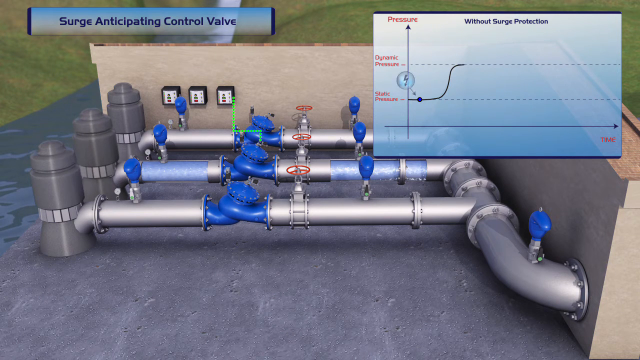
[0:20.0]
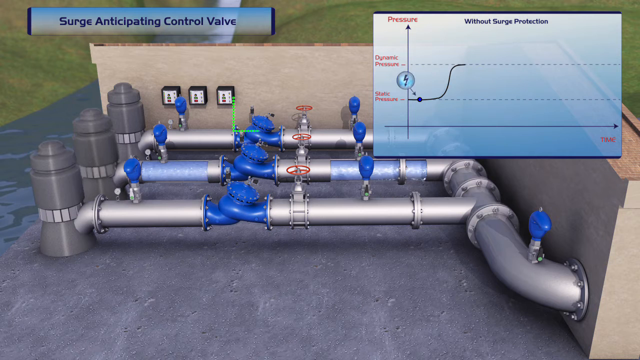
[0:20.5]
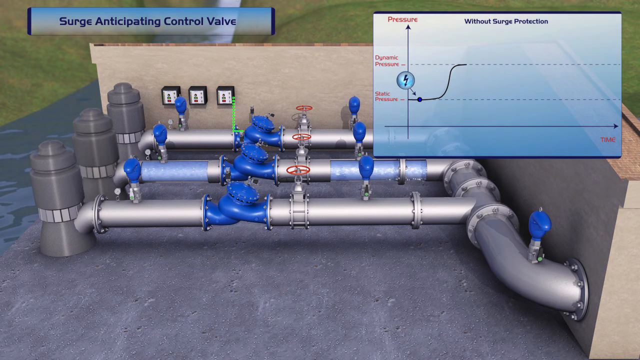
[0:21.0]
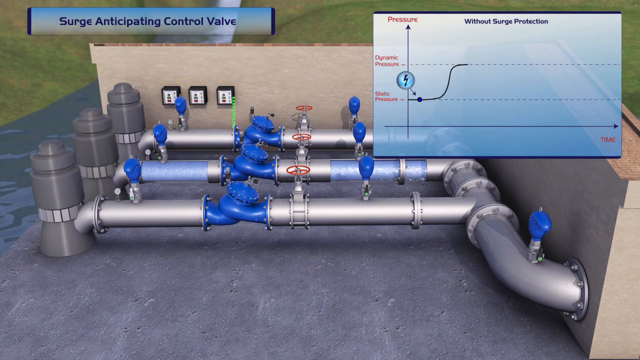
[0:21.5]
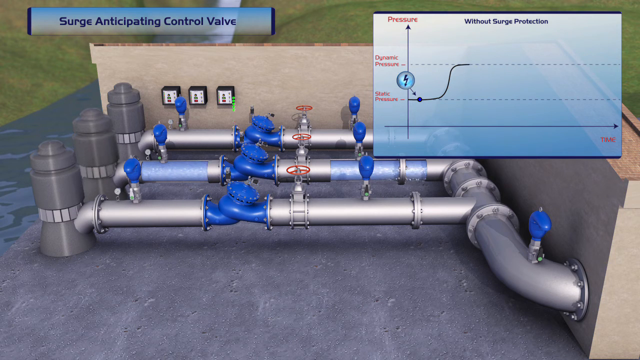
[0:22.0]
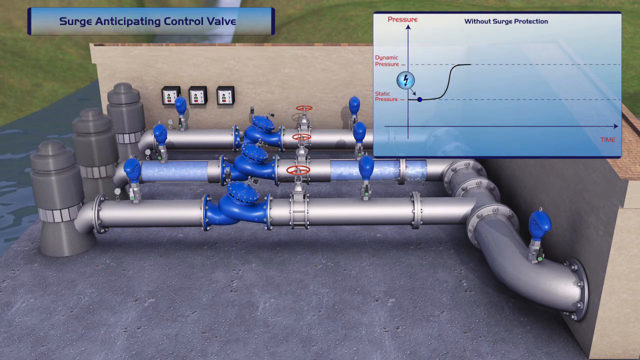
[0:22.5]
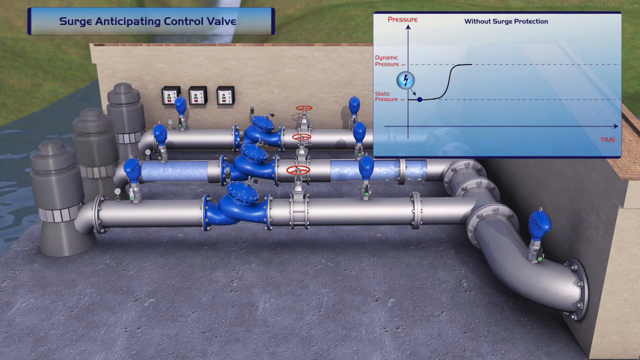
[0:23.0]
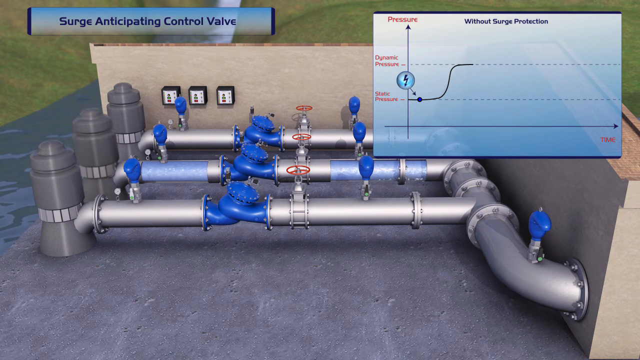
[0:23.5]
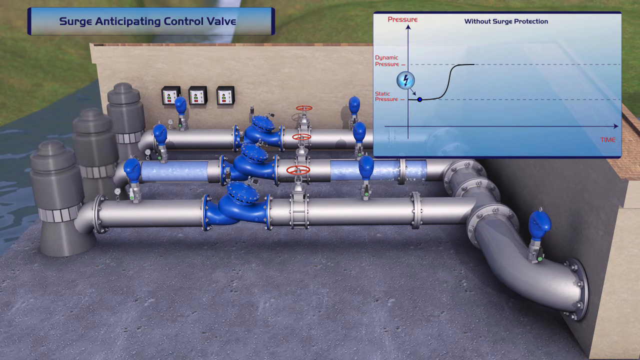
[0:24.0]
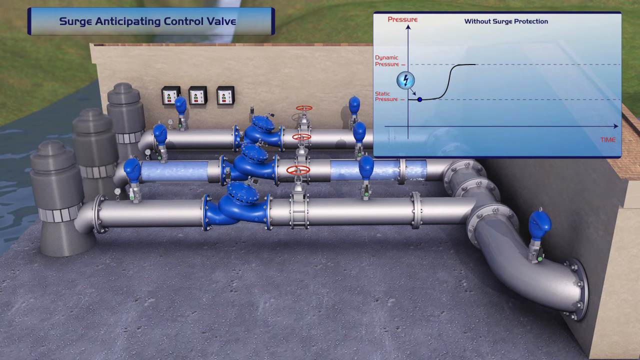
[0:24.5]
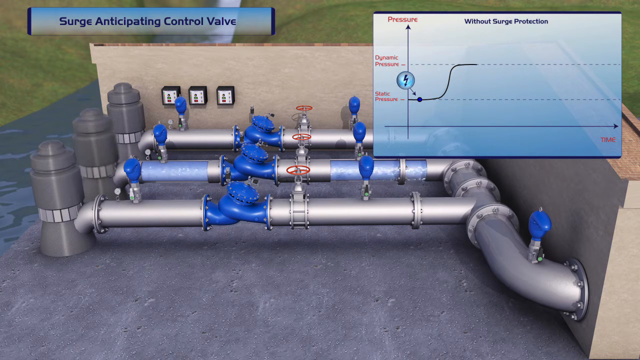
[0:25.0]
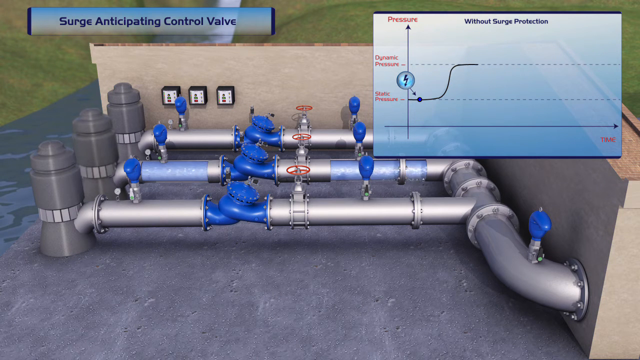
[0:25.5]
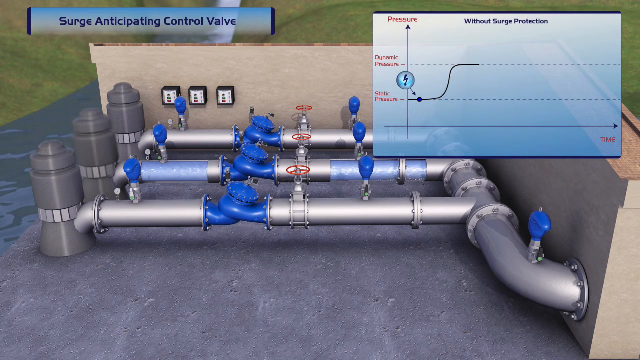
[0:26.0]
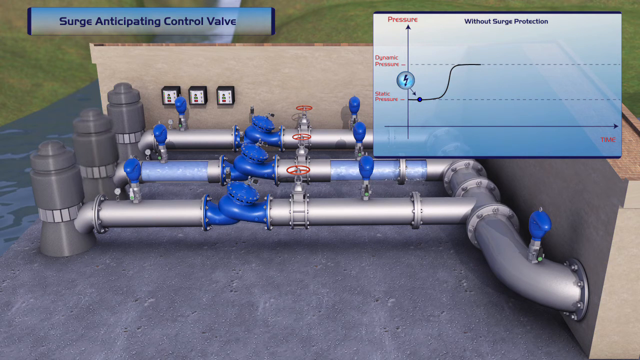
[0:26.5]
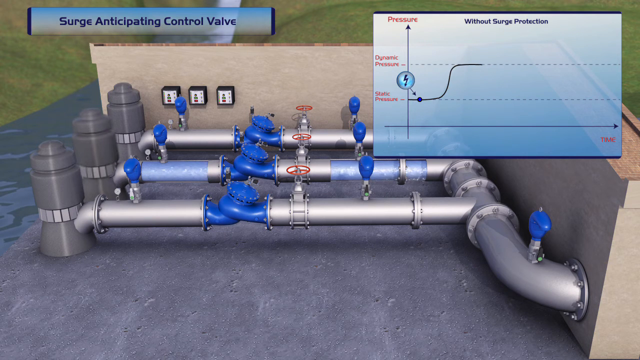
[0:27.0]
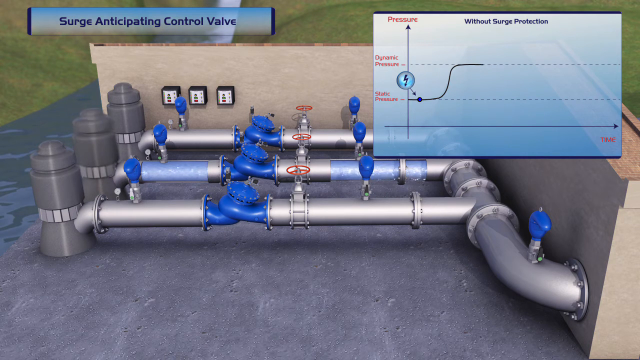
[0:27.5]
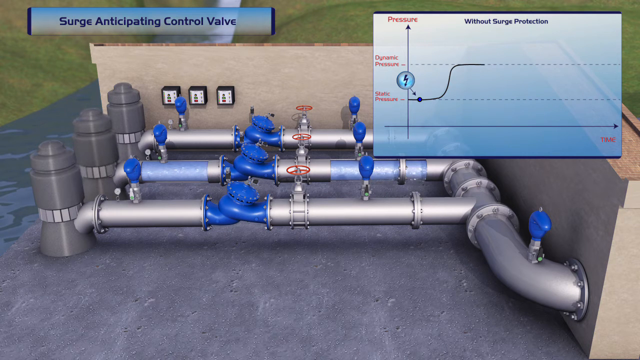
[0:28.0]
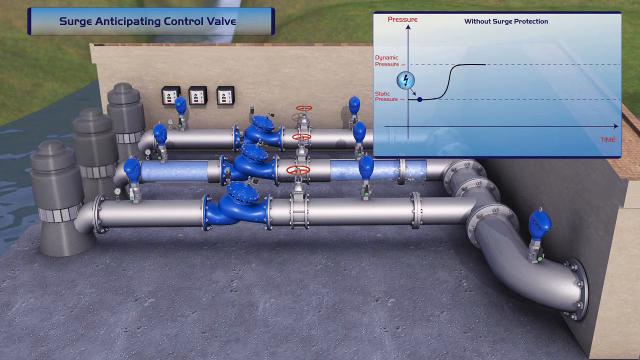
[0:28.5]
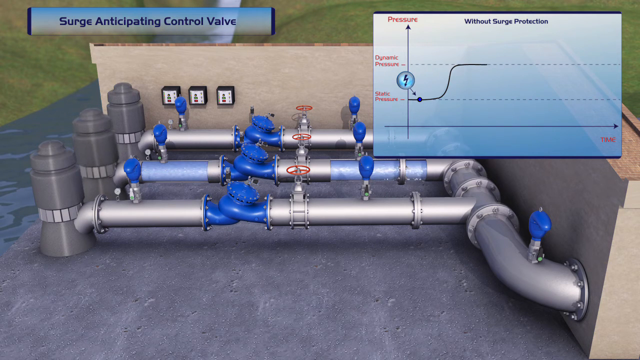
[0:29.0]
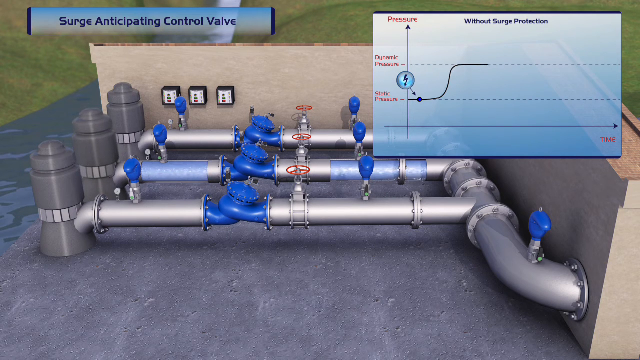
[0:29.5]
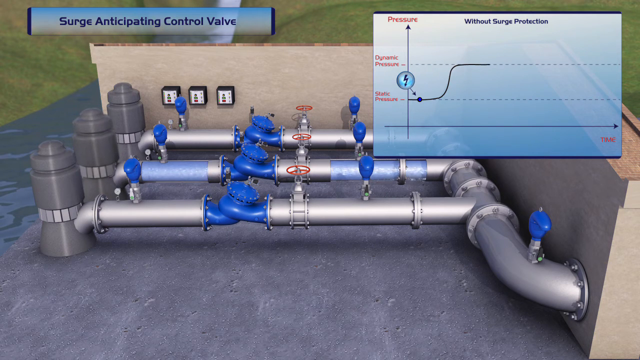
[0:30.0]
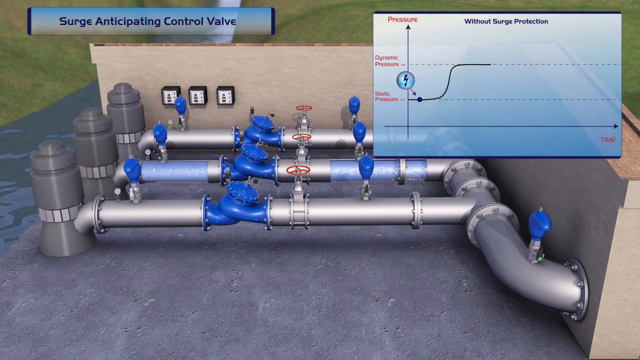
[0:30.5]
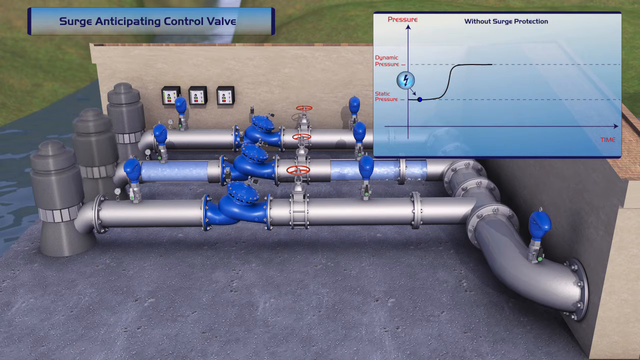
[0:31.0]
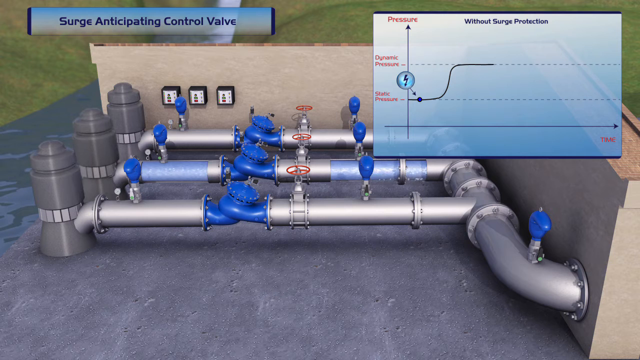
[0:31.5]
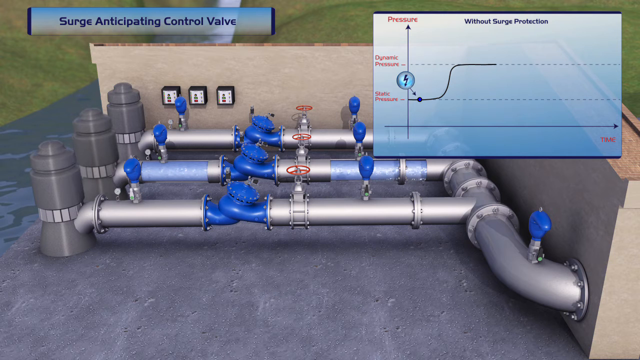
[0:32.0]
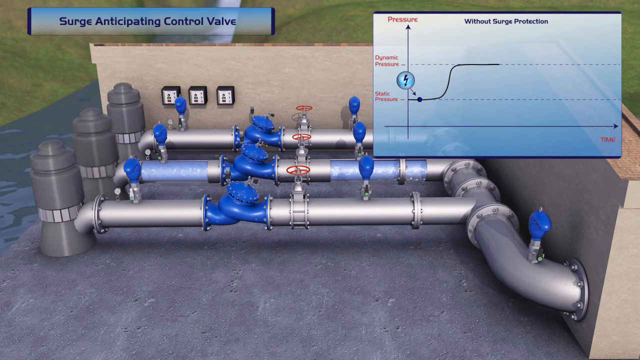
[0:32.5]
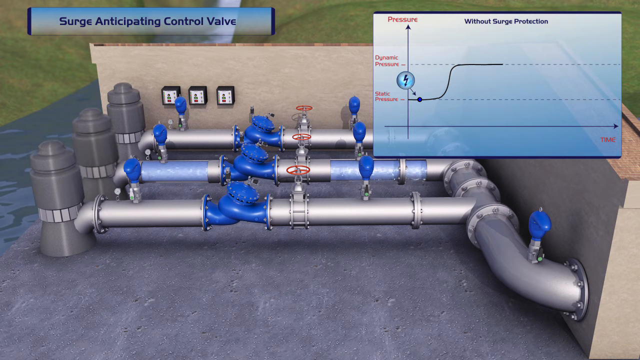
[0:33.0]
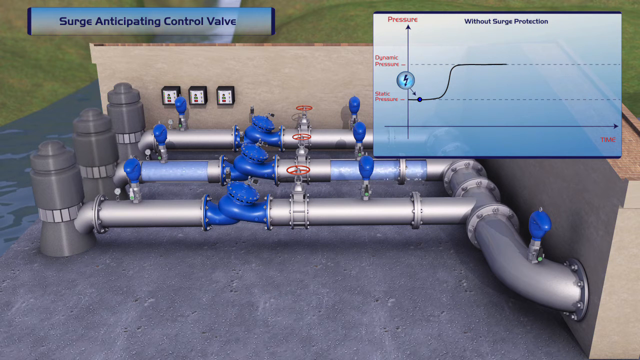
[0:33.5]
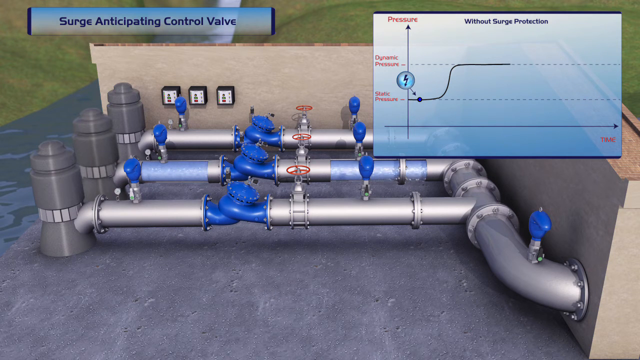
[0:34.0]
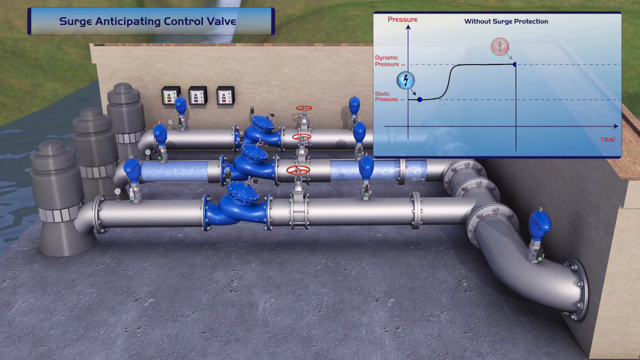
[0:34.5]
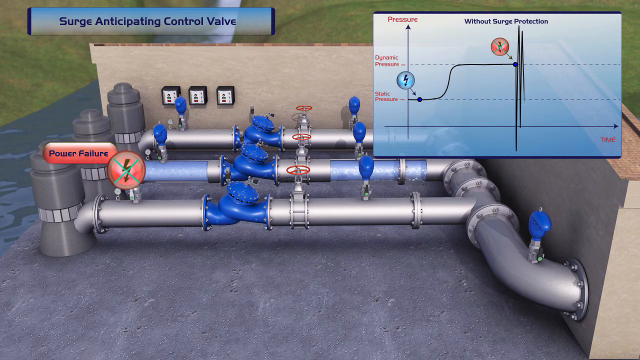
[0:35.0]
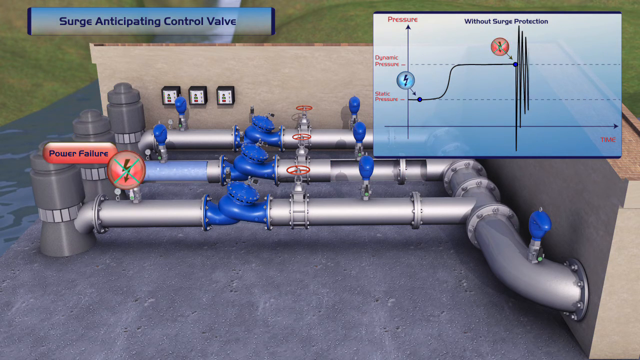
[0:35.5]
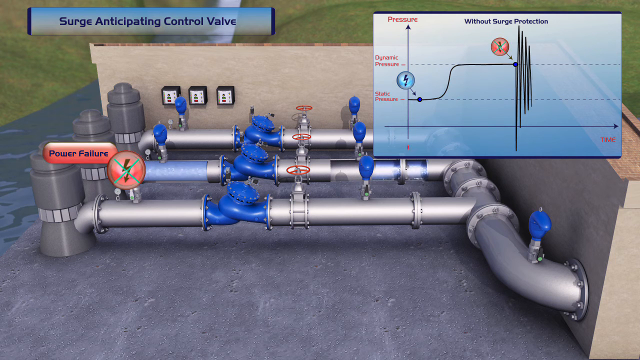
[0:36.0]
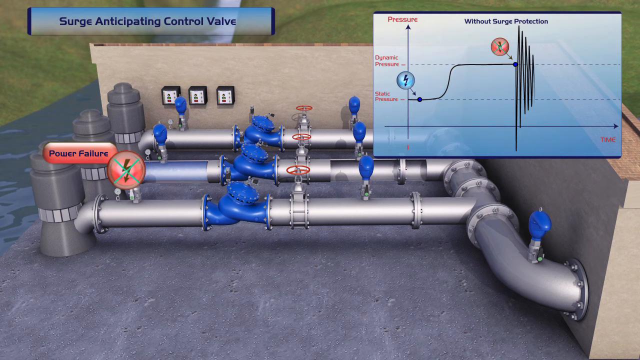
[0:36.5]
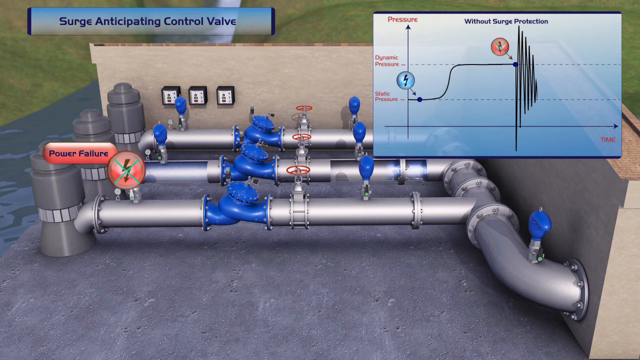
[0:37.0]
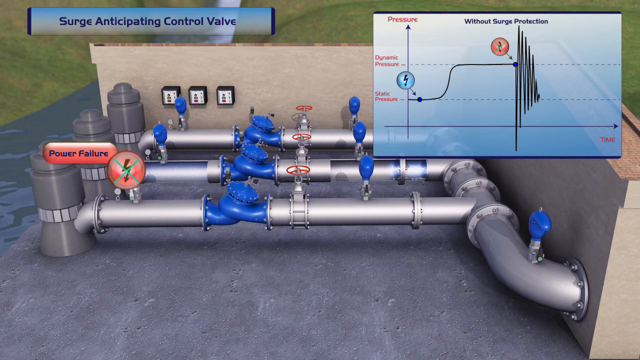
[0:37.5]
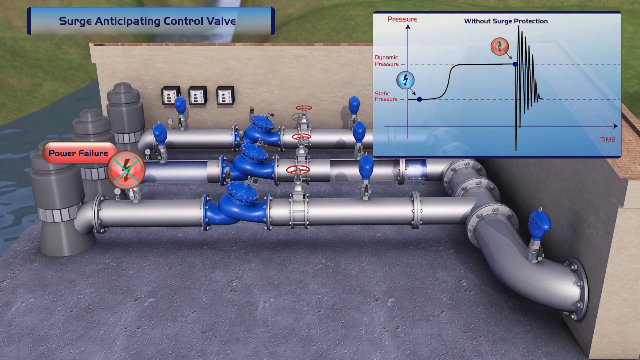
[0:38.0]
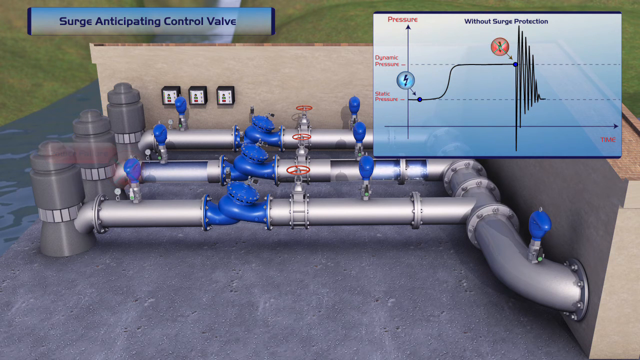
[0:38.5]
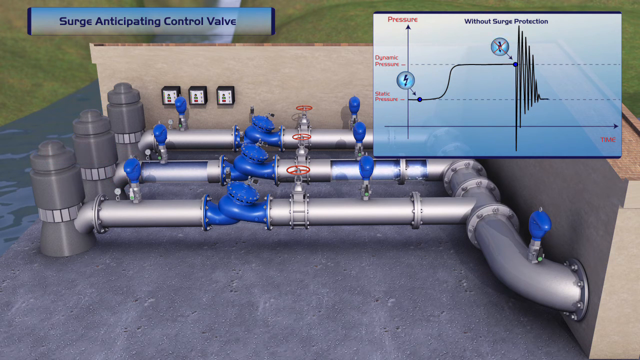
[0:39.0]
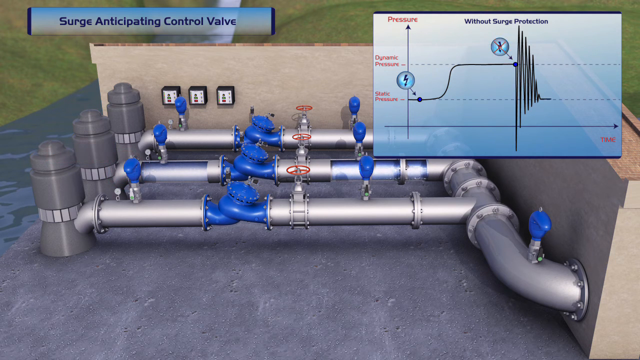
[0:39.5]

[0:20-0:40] The front view shows a structure on the bank of water: a series of three pumps with pipes coming out of them that meet a single larger pump to the right. A banner in the upper left says "surge anticipating control valve", and a bar graph on the right is labeled "without surge protection". On the graph, the first line is static pressure, and the line goes out from it. A small circle is labeled with a thunderbolt to show electricity. The line curves upward to the top horizontal dotted line, labeled dynamic pressure, and continues moving right along it. After going out a bit, it suddenly starts zigzagging up and down from the very top of the chart to the bottom and then more toward the center until it hits the lower horizontal dotted line, static pressure. It zigzags about five times before reaching that line, in a kind of triangular shape. A dot on the top horizontal line is labeled with a blue circle with a red X inside it, flashing red and blue.